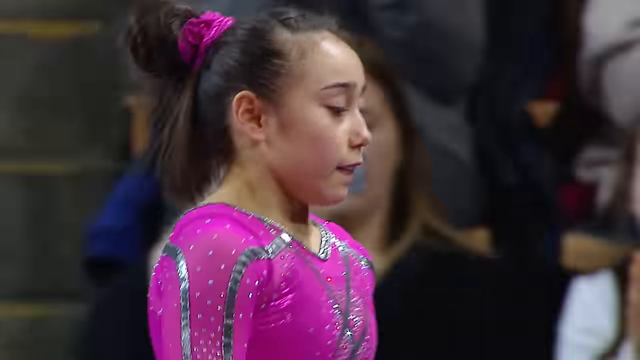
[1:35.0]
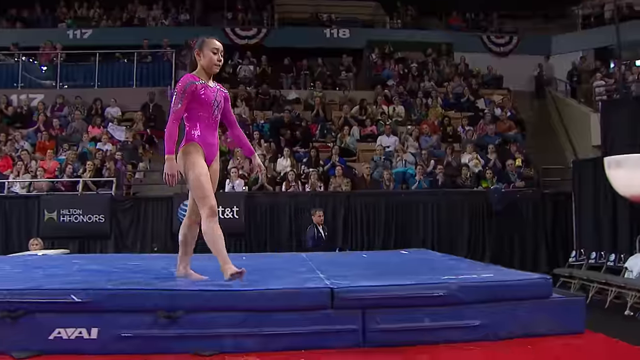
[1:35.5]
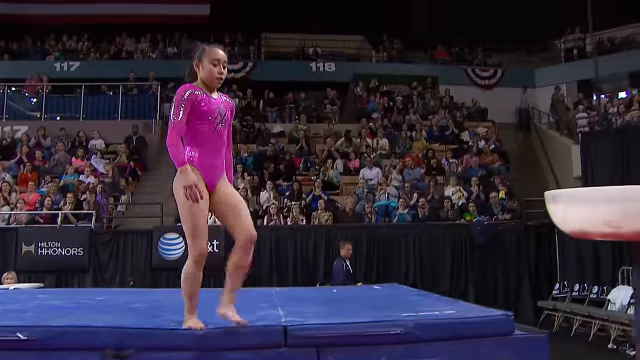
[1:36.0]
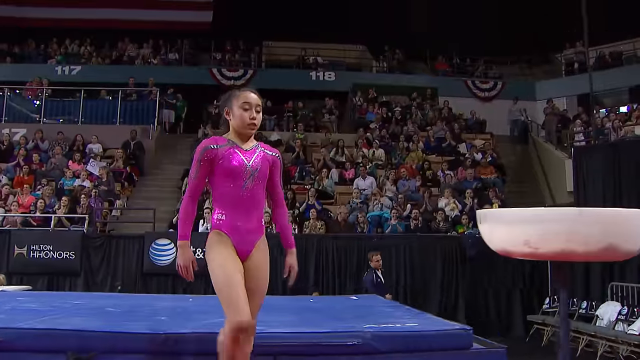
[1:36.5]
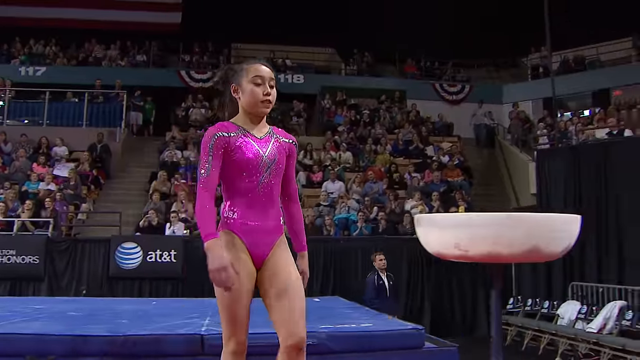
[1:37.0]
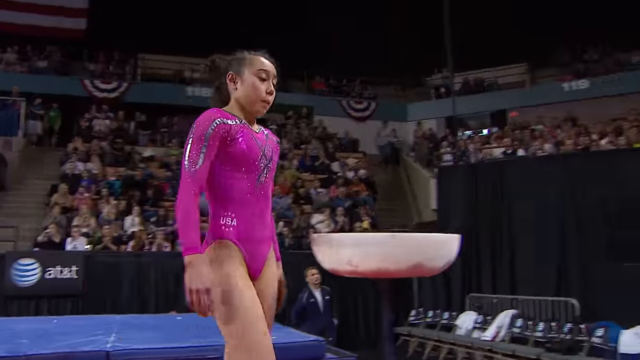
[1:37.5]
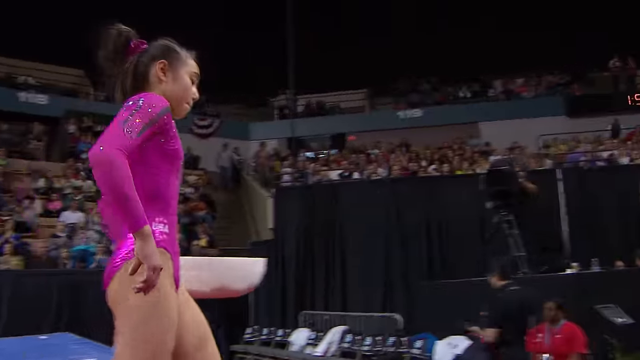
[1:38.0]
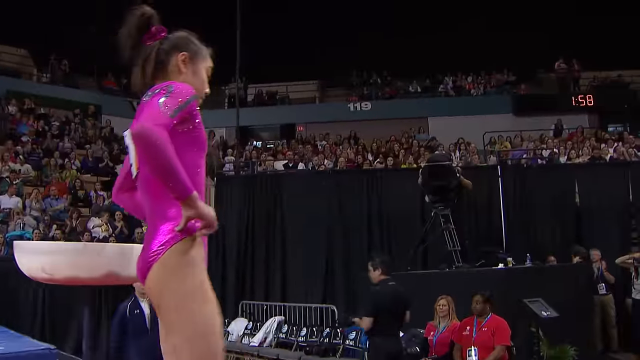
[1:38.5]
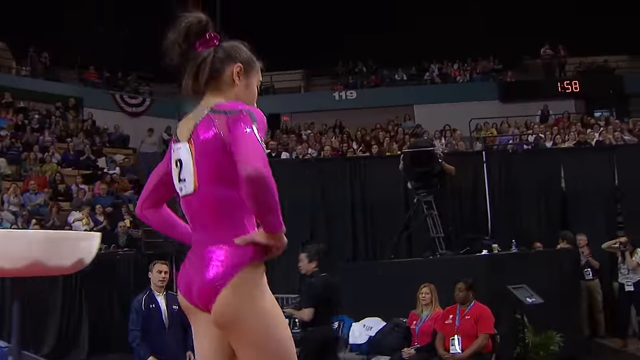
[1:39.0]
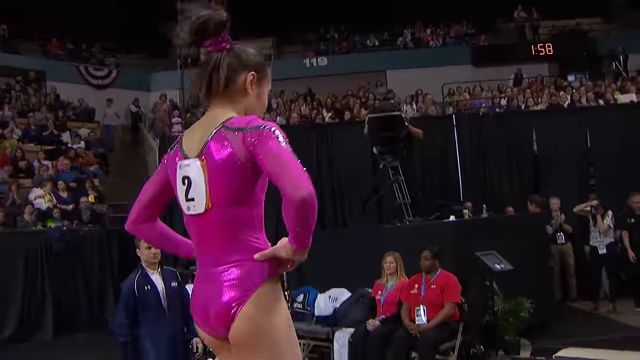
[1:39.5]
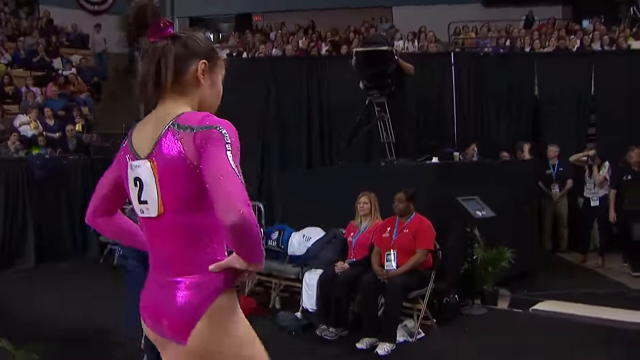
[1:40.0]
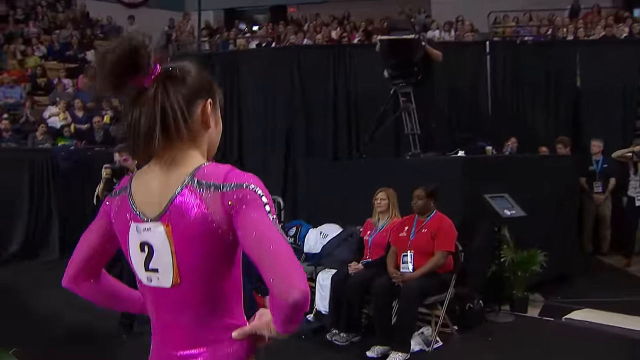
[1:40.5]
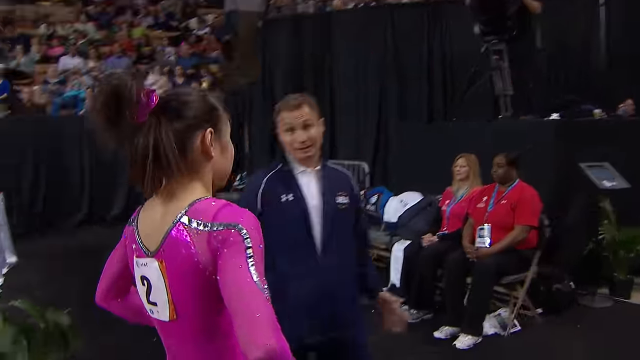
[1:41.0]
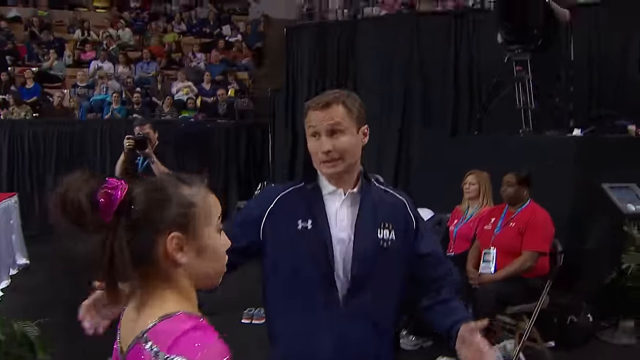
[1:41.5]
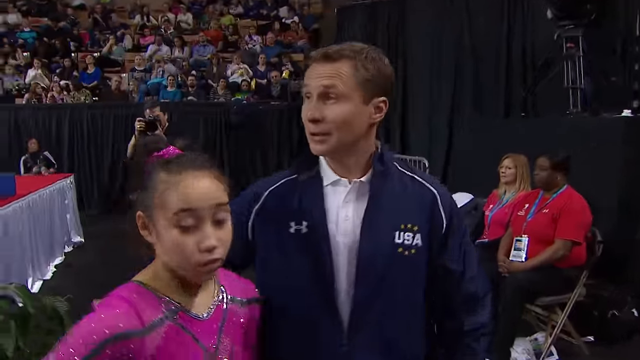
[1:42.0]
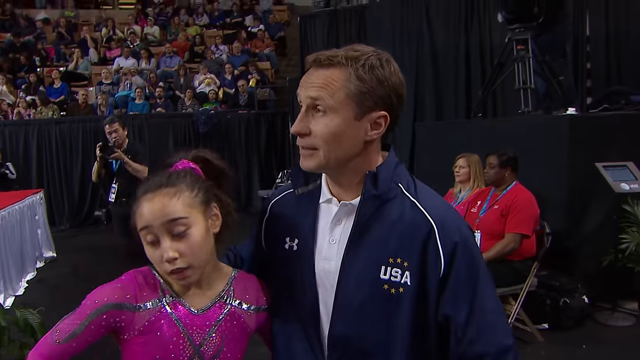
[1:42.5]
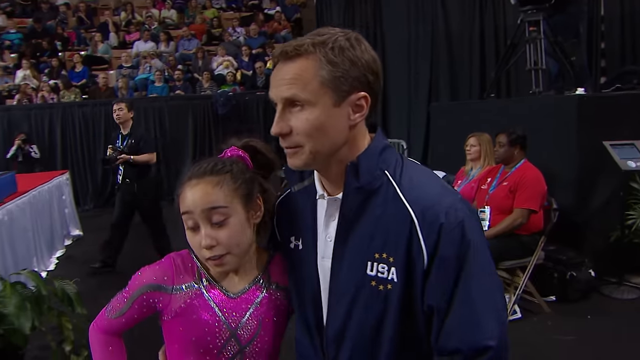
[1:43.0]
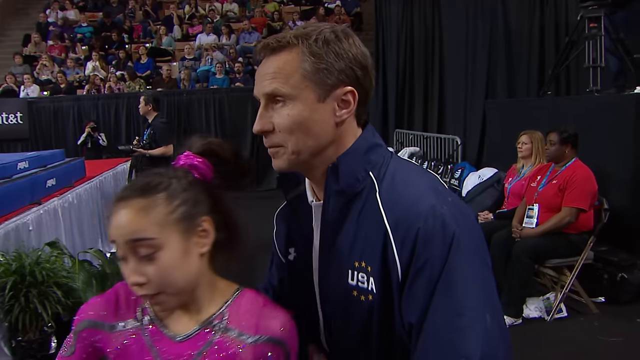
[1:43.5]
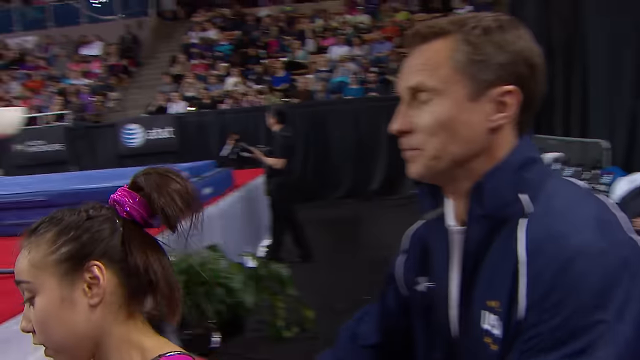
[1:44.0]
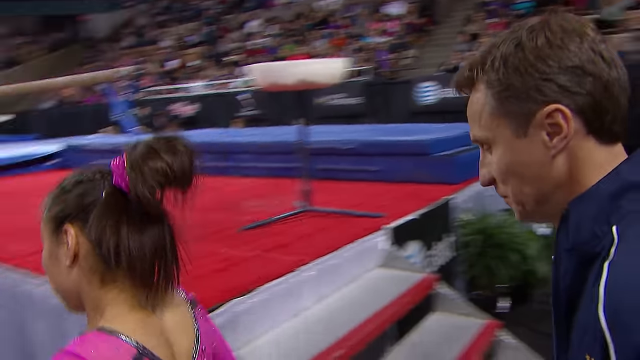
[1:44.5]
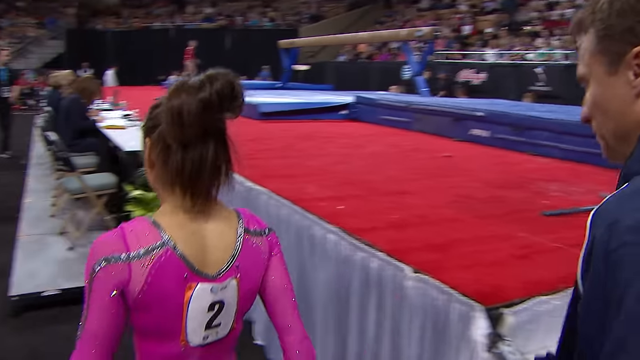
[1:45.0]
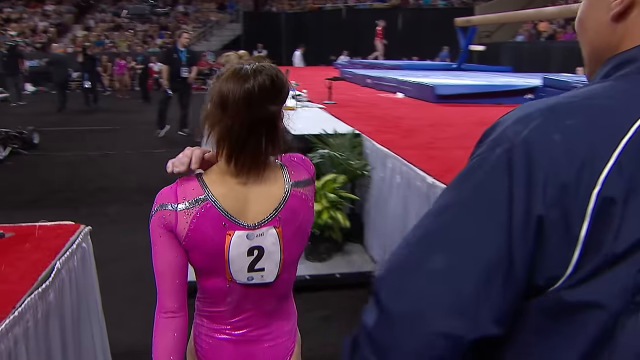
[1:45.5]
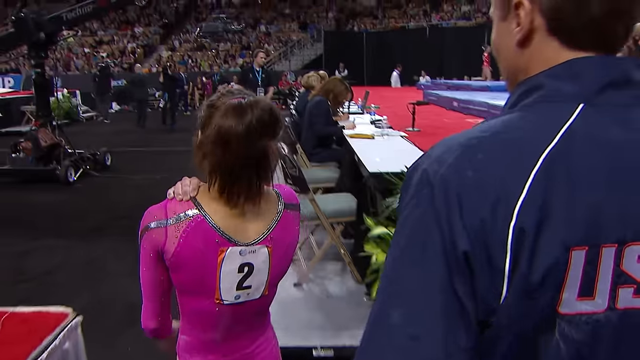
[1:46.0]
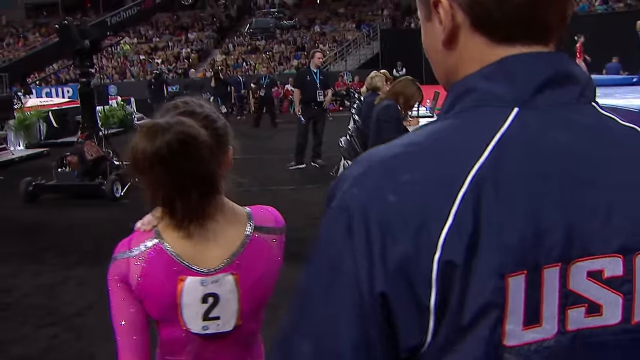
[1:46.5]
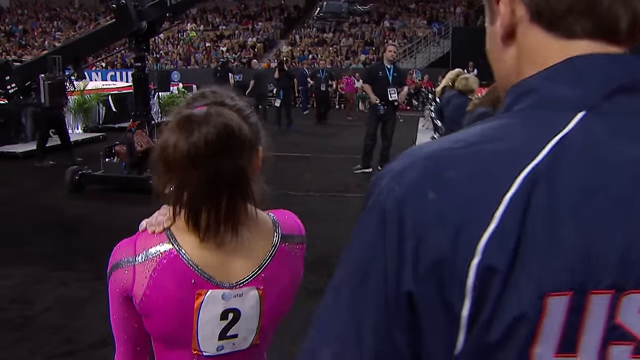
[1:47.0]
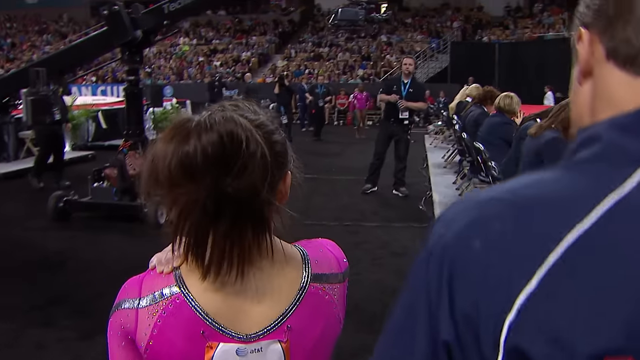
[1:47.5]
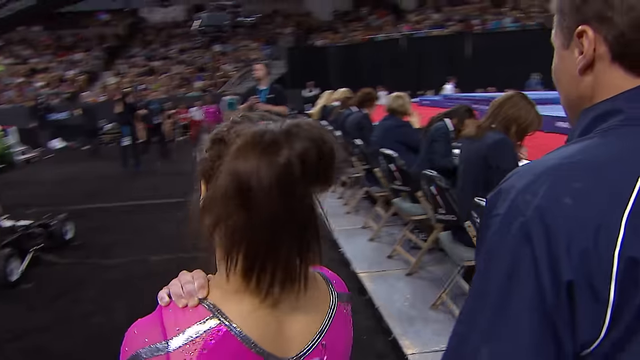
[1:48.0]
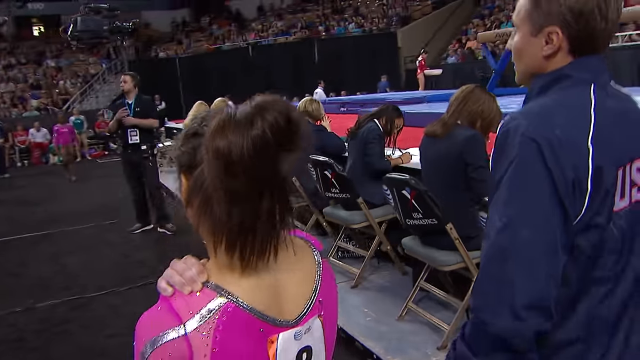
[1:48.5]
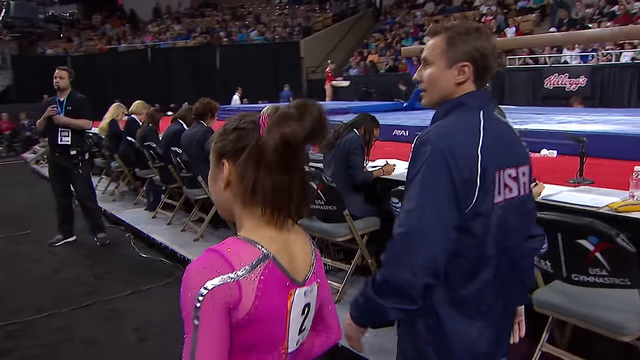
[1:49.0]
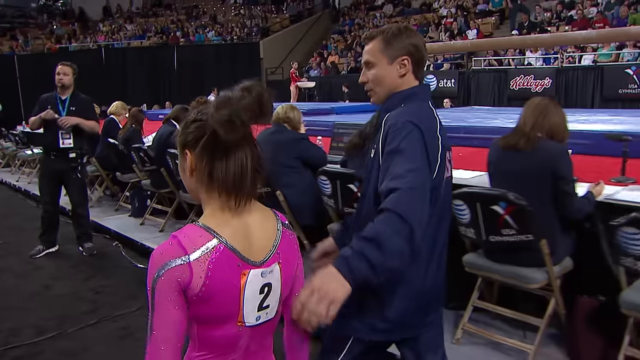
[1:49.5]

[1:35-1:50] The girl is tired and standing off the blue mat with her hands at her waist; she looks very tired. The coach, in a USA track jacket, pushes her towards the side with one arm around her. She has silver sparkles and glitter, one hand on her shoulder, and she is looking down; she has dark brunette hair. The coach has short hair and looks happy as they walk off to the side. There appears to be some kind of machine, a camera looking over the balance beam. There is a large white bowl and what appears to be a very large, heavy man in a red shirt and black pants. The multiple judges appear to be scribbling something on their papers. People are standing in the background, and there is more camera equipment and people in the audience. They walk toward what appears to be a man holding a water bottle with a badge around his neck.